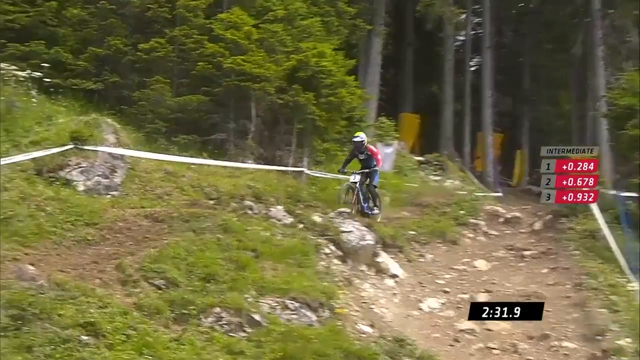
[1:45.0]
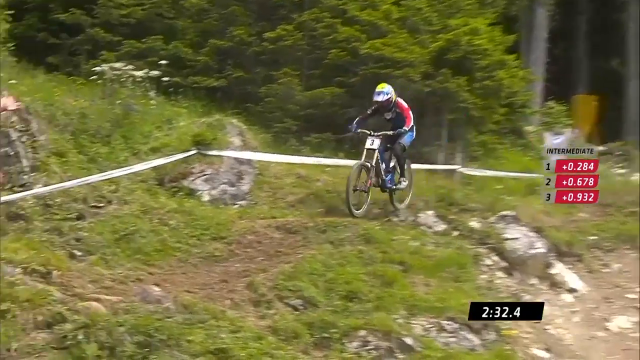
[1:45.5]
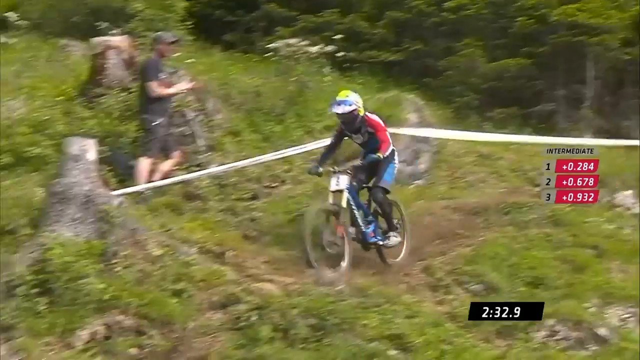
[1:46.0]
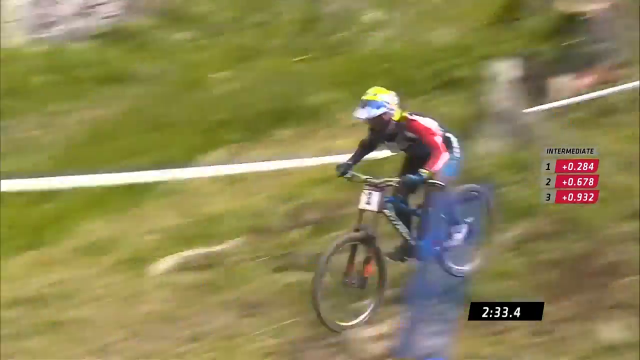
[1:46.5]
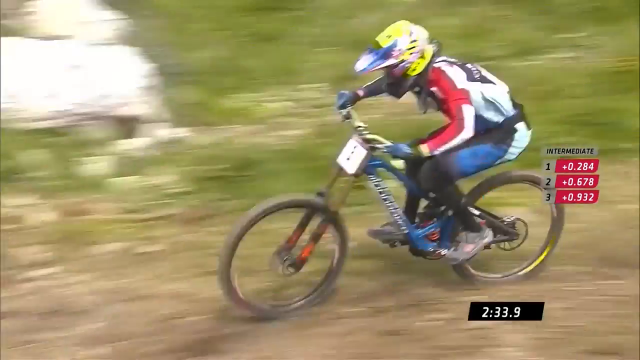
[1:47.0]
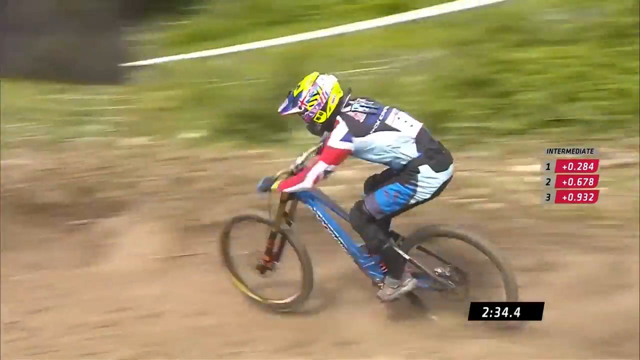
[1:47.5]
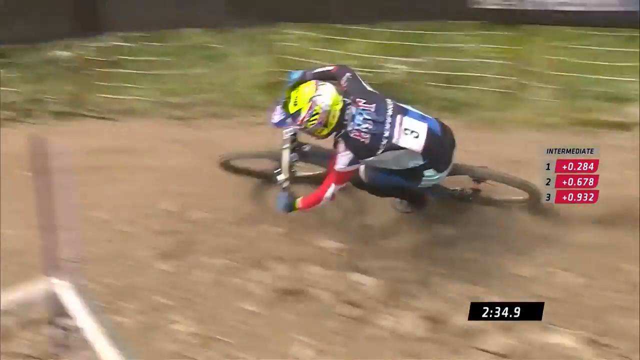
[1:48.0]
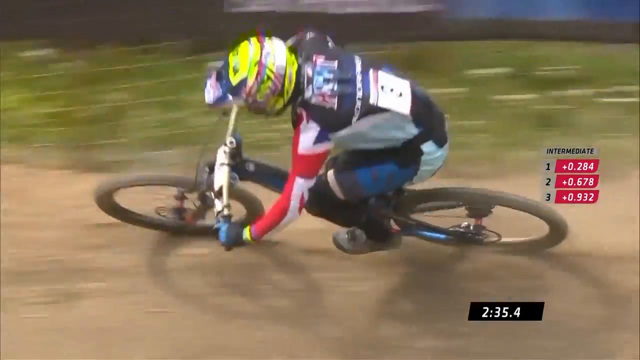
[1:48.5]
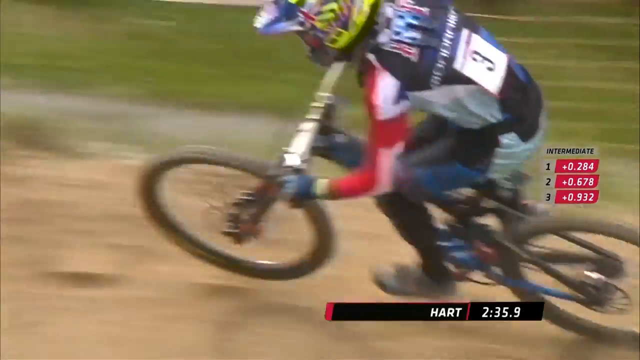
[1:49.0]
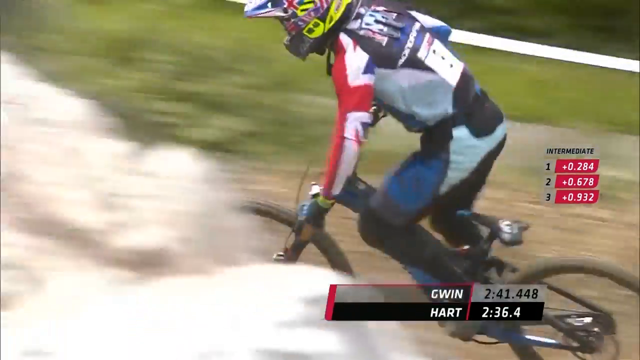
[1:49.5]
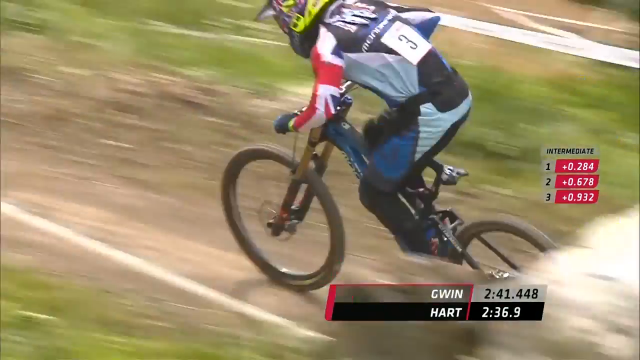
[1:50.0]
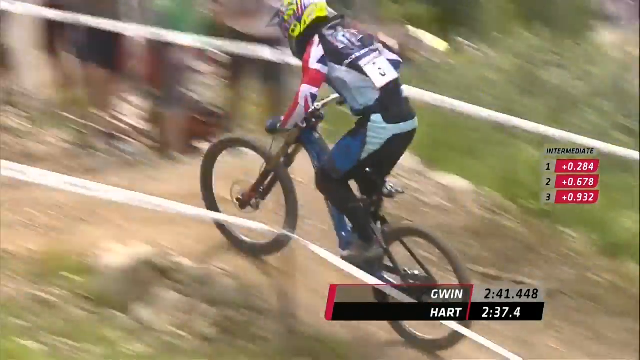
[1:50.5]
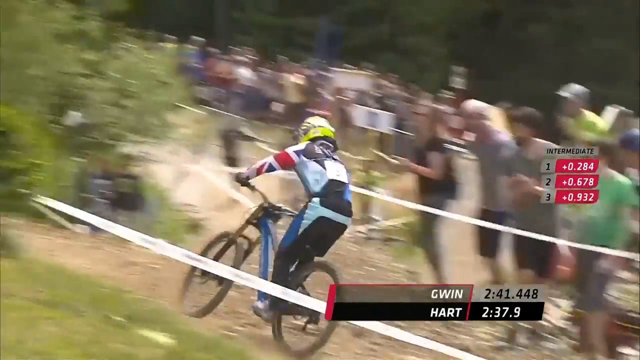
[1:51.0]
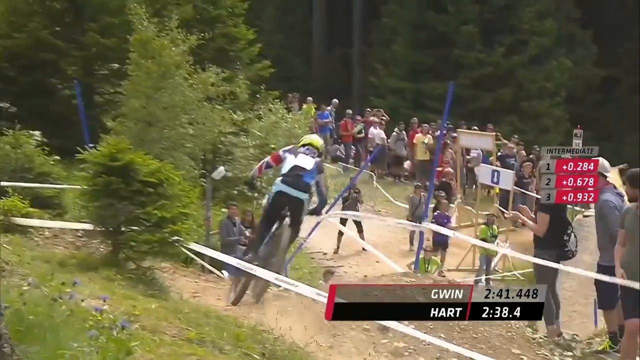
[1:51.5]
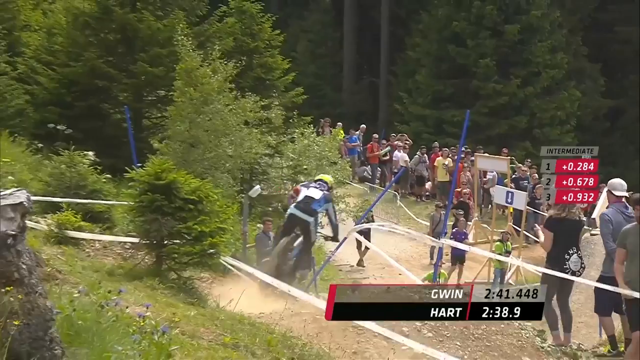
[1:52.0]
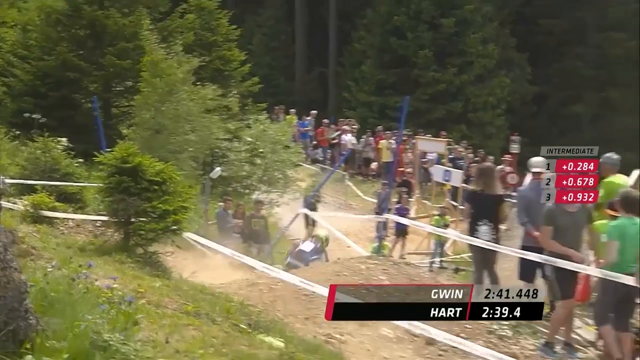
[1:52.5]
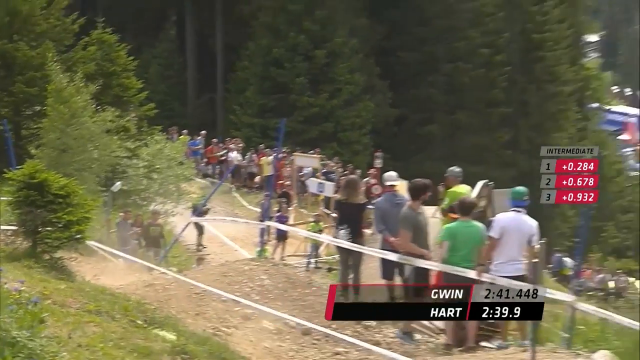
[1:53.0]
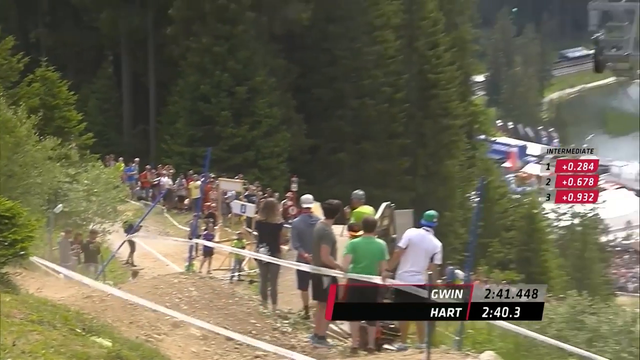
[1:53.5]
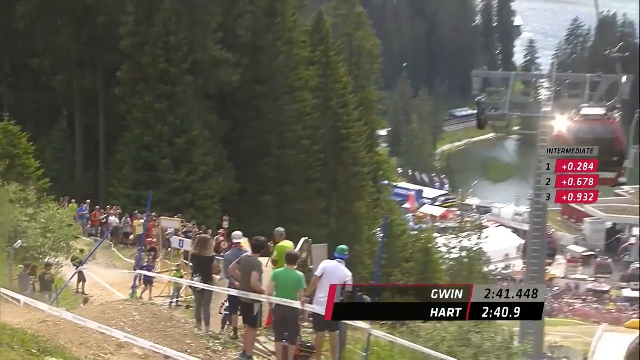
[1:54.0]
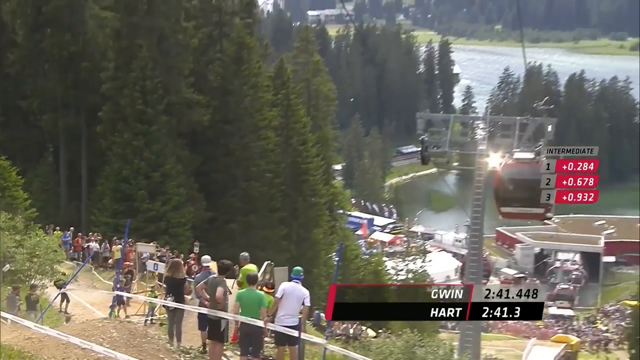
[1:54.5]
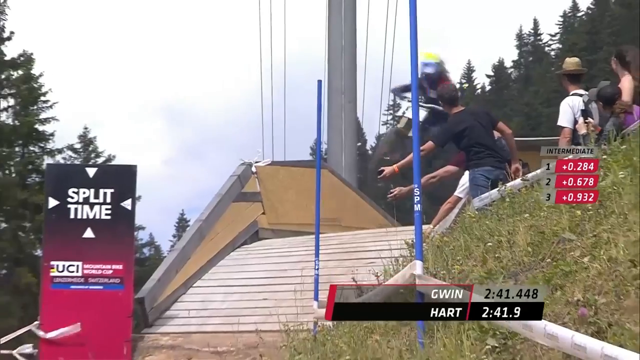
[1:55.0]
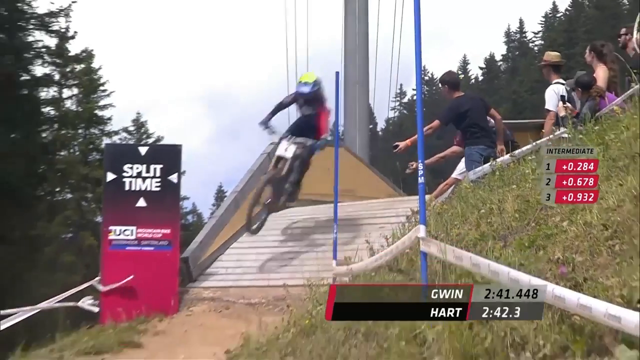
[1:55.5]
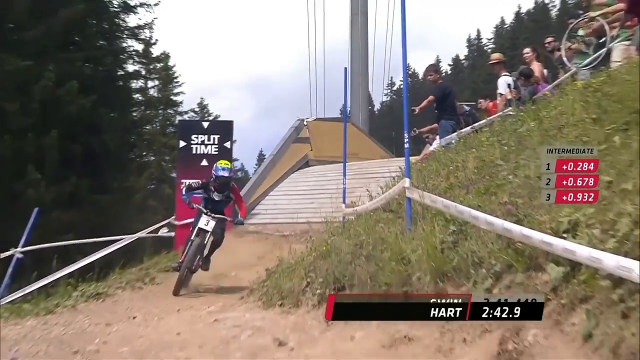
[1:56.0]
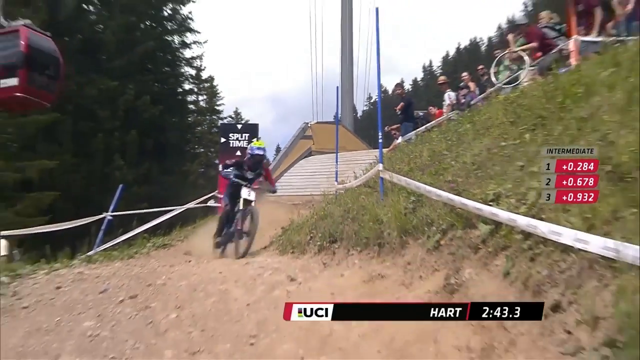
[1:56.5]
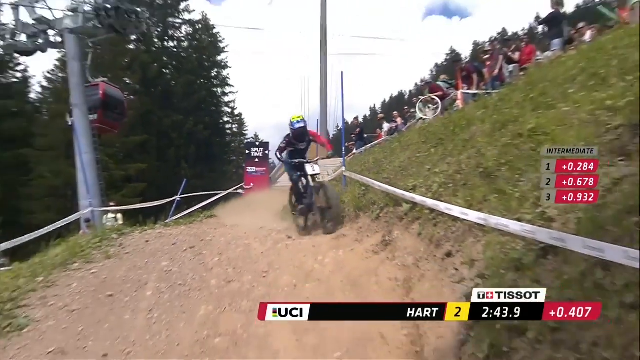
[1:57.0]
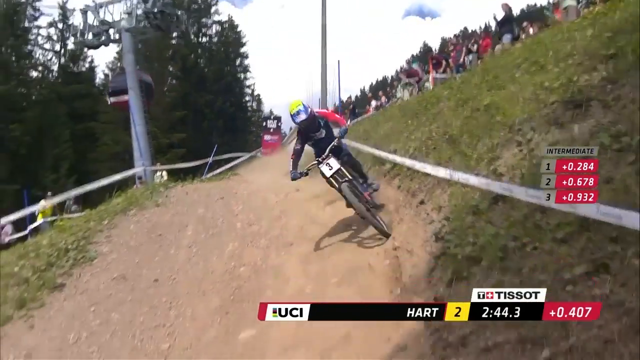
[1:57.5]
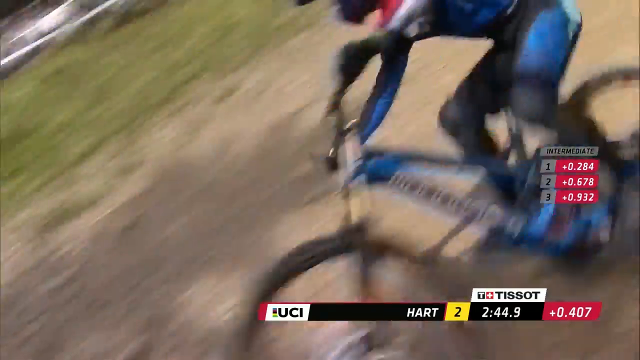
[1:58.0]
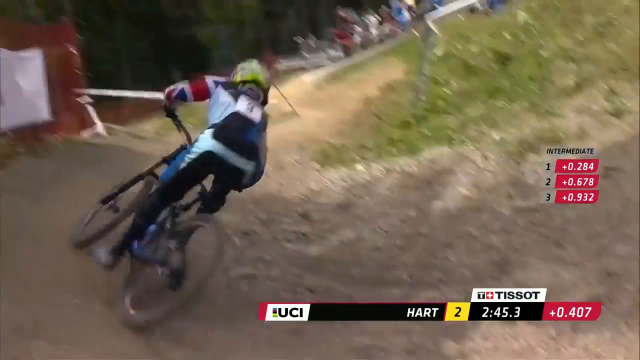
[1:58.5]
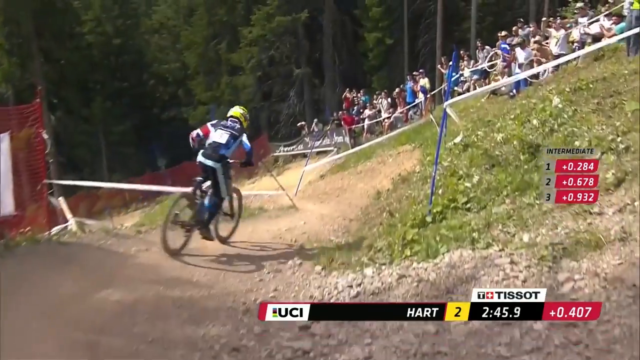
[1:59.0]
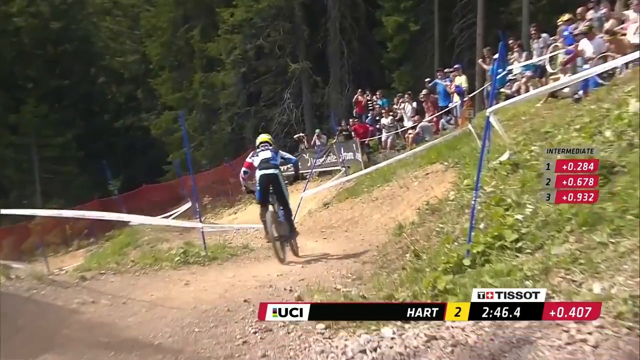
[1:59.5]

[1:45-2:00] Coming out of the tree line and up over the hill, the biker makes a sharp left turn on the path into a large group of people standing on either side of the dirt path, separated from it by white tape. He is almost completely down the mountain: the mountain range is no longer visible in the background, and a lake and a dock are now visible. He makes a sharp turn to the right and then the left, catapults over a wooden plank that says "split time", and continues down the hill on the dirt path.